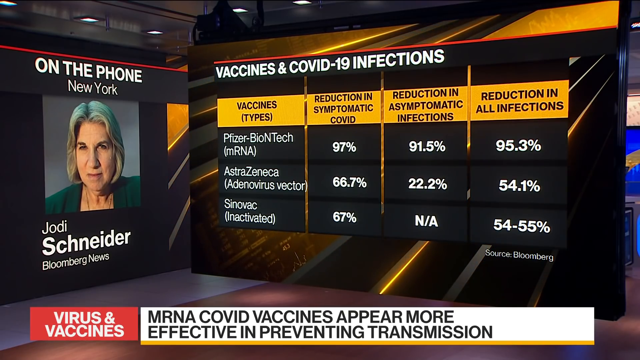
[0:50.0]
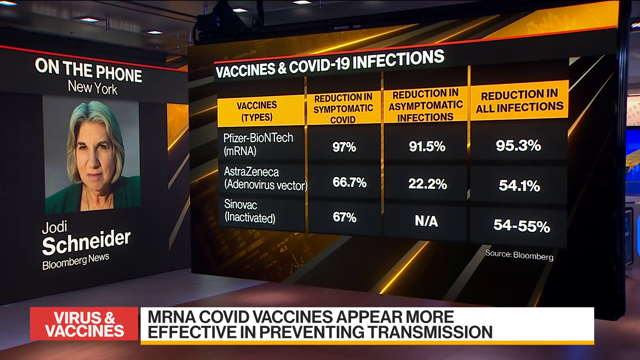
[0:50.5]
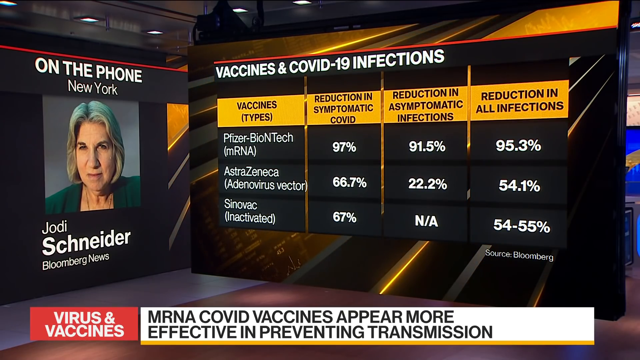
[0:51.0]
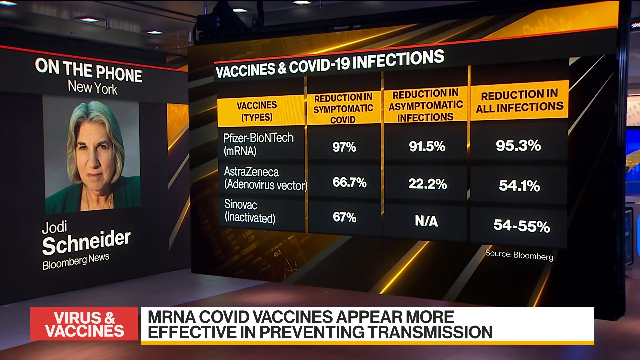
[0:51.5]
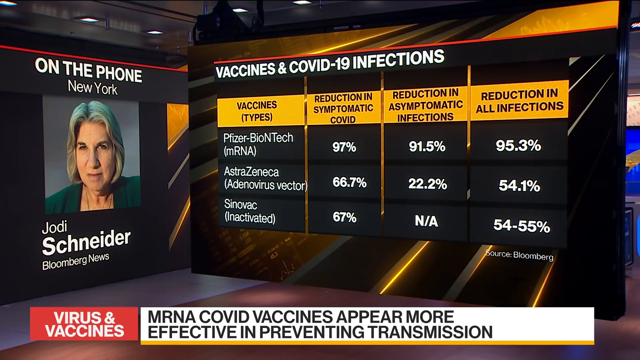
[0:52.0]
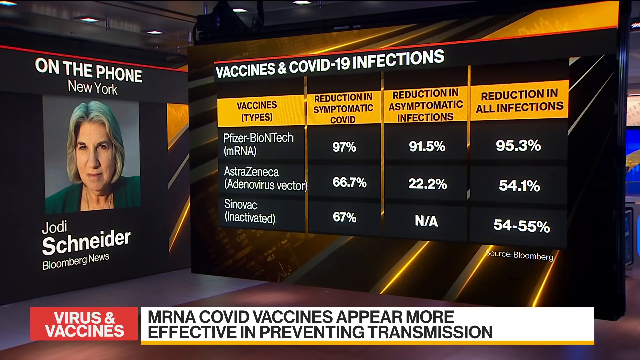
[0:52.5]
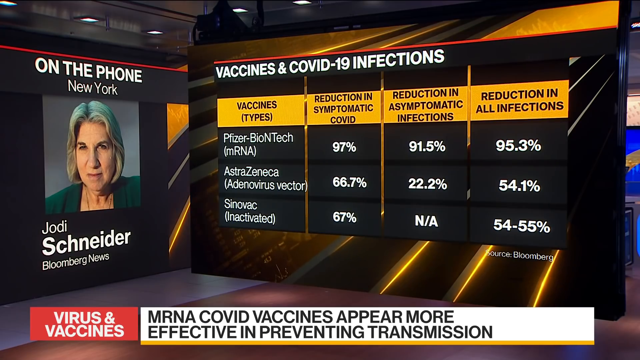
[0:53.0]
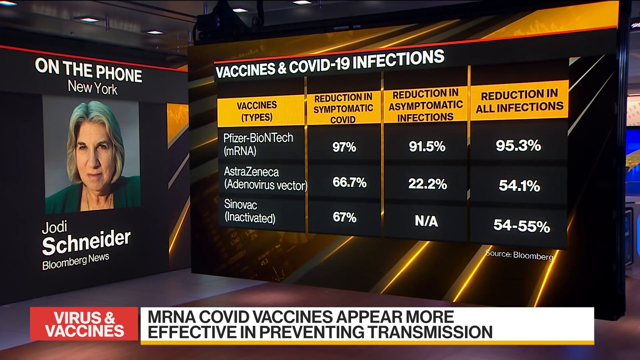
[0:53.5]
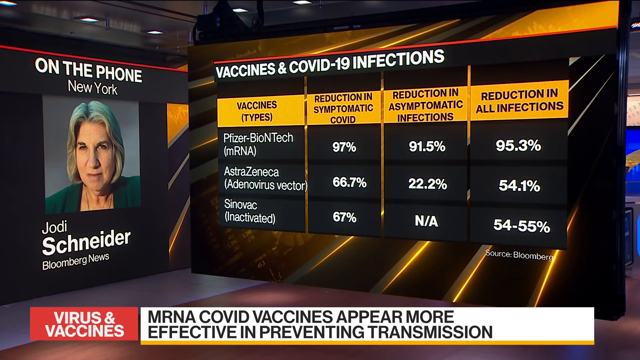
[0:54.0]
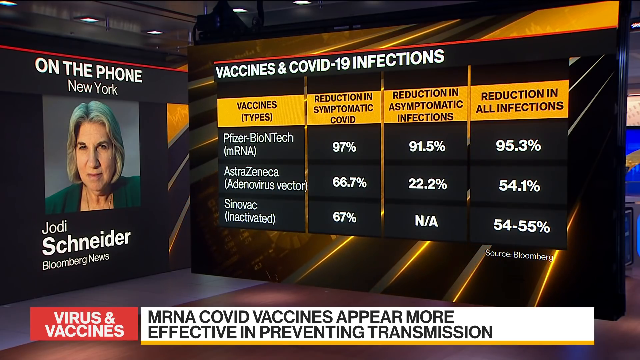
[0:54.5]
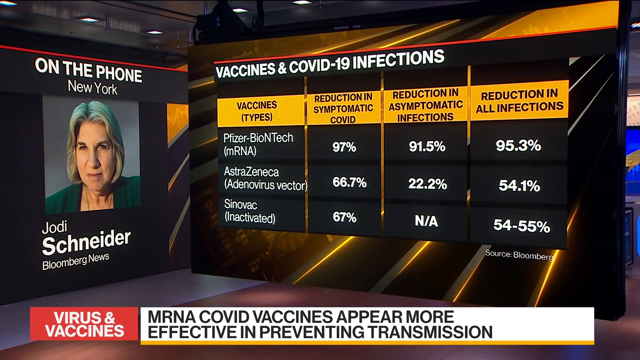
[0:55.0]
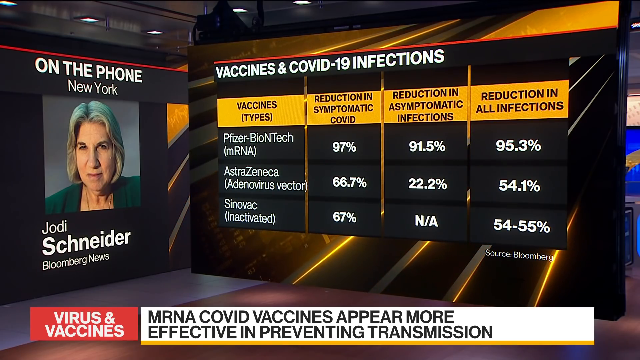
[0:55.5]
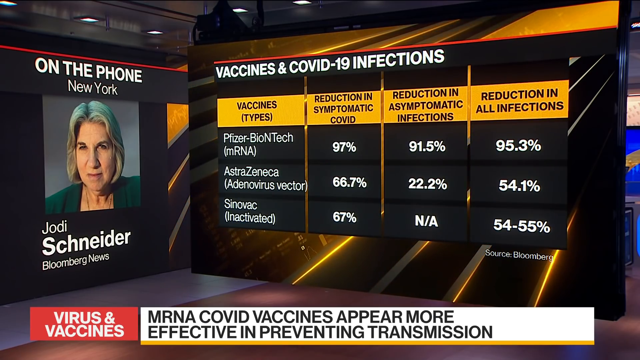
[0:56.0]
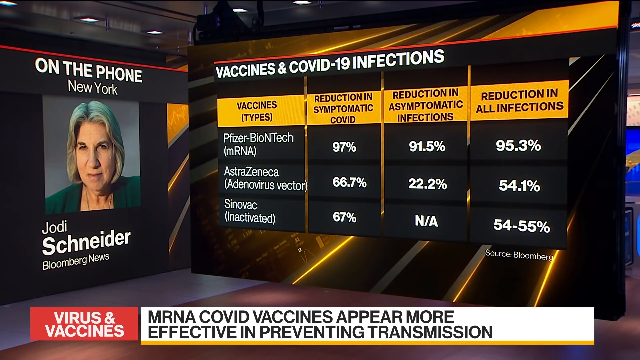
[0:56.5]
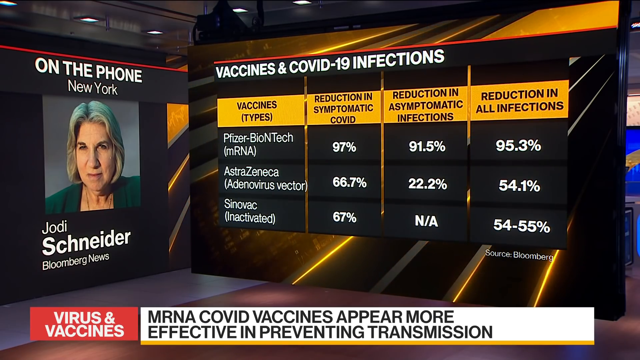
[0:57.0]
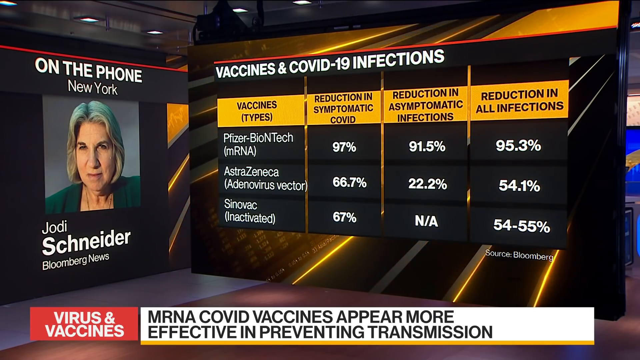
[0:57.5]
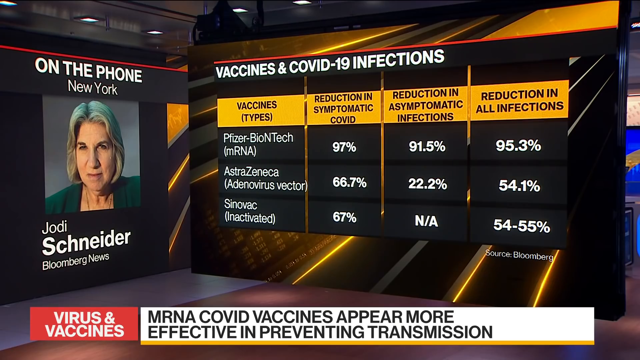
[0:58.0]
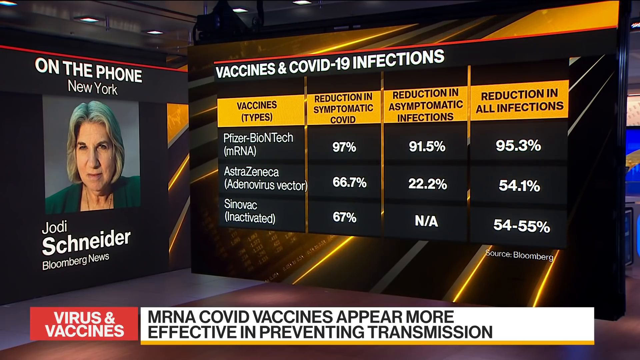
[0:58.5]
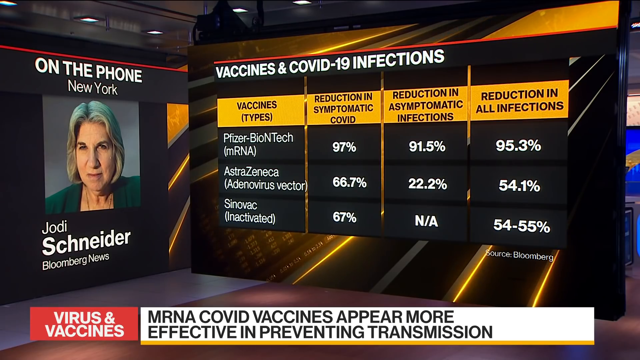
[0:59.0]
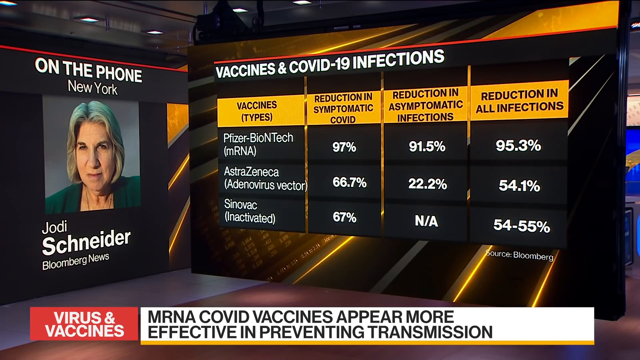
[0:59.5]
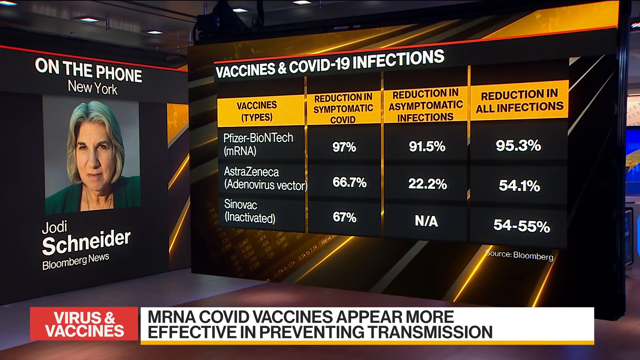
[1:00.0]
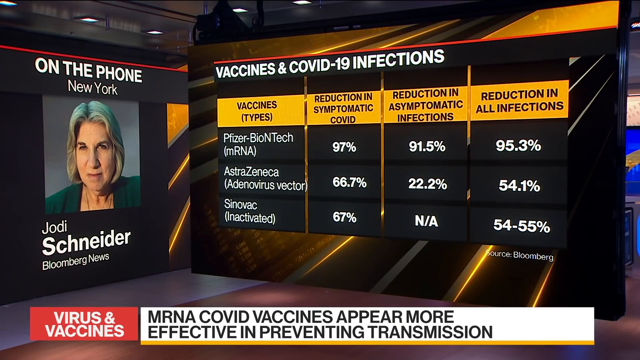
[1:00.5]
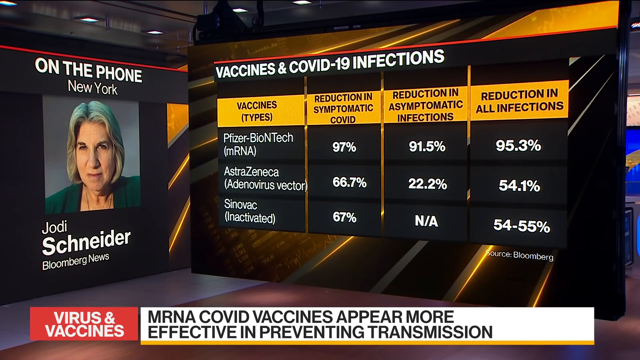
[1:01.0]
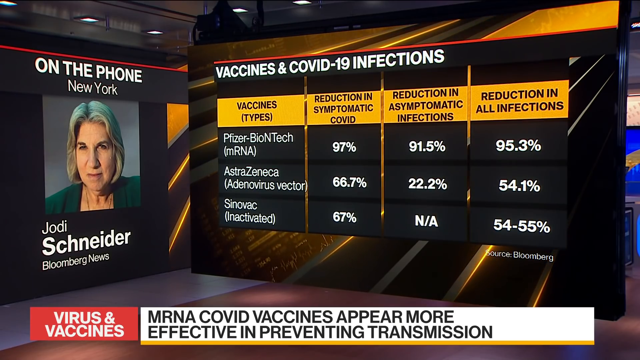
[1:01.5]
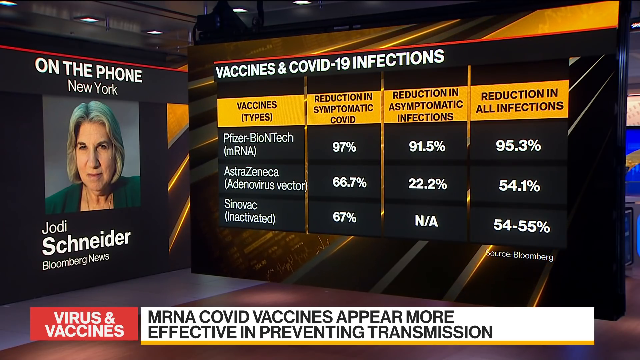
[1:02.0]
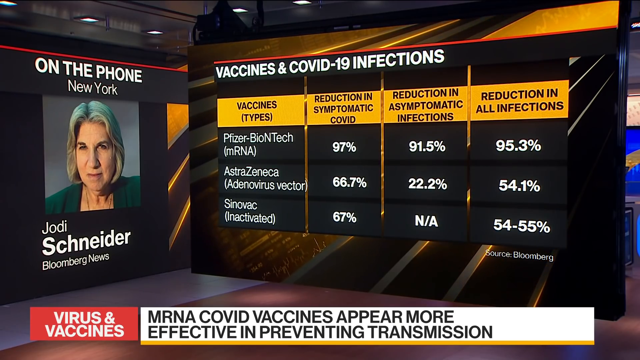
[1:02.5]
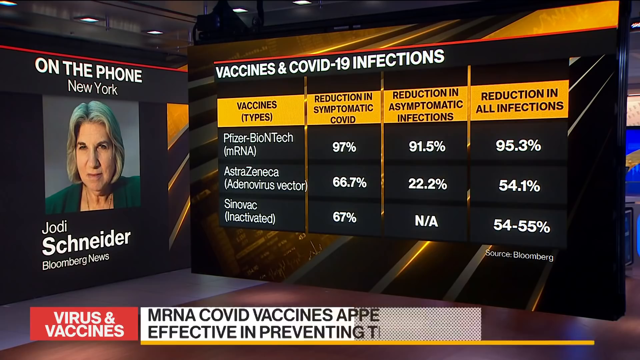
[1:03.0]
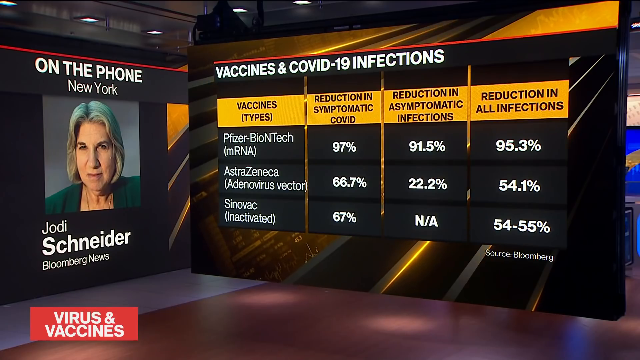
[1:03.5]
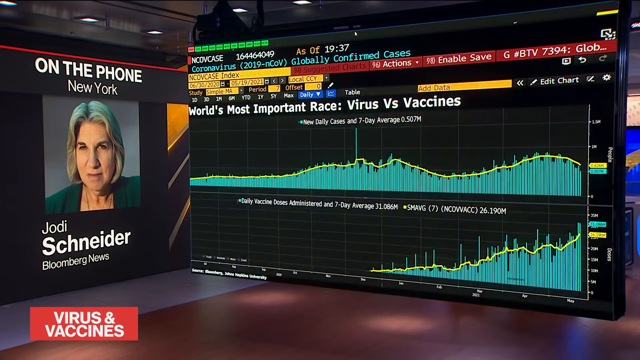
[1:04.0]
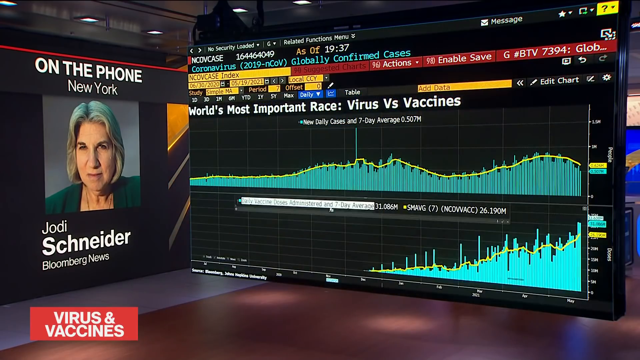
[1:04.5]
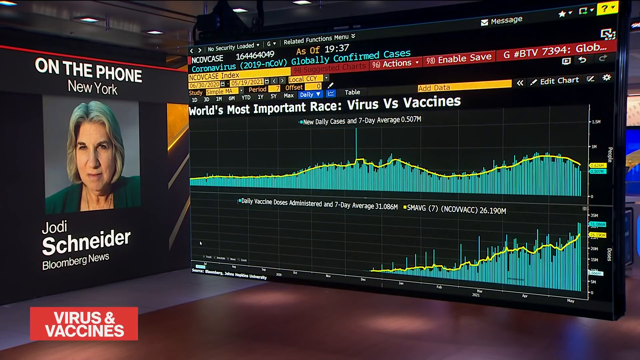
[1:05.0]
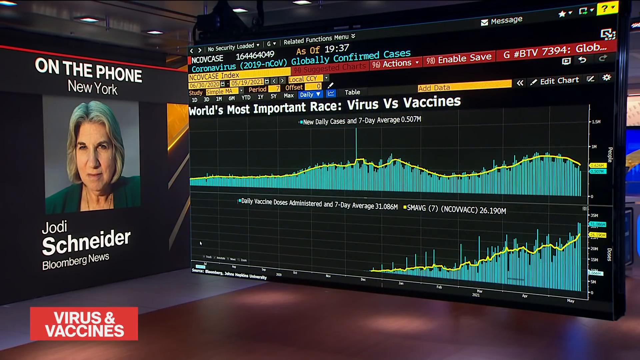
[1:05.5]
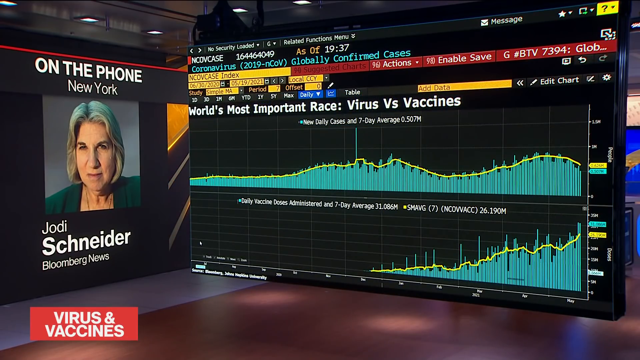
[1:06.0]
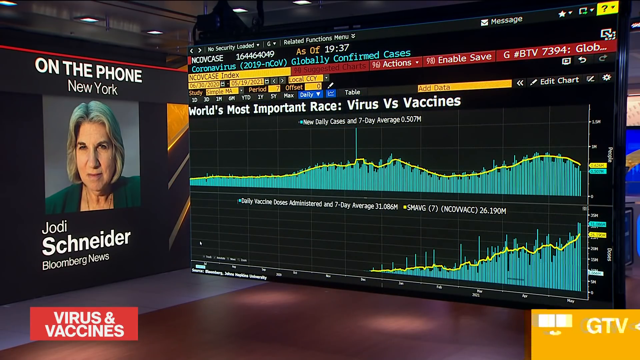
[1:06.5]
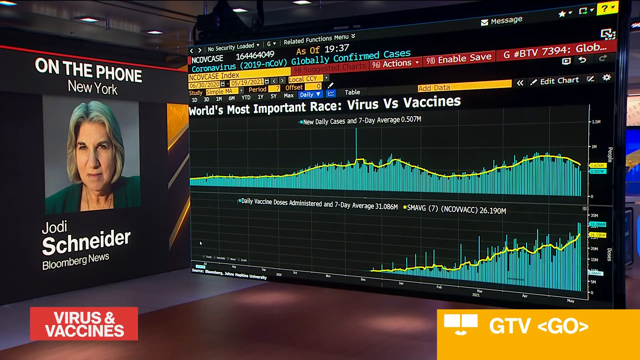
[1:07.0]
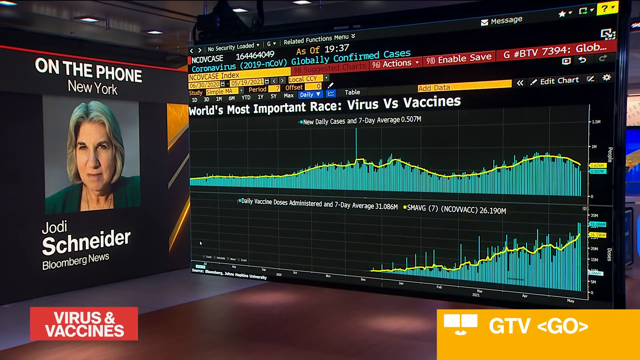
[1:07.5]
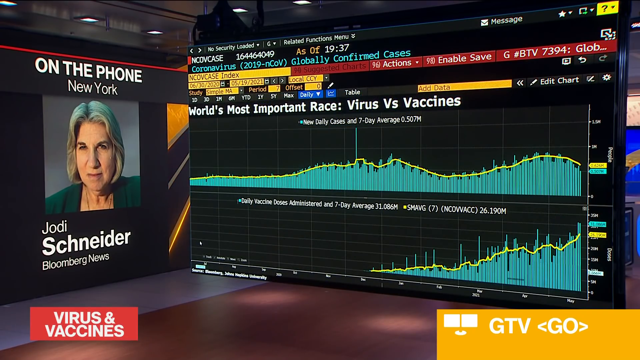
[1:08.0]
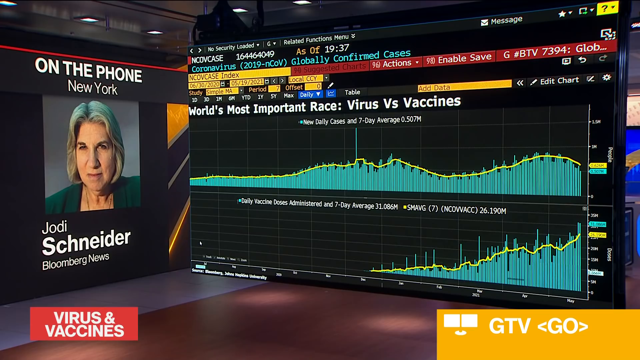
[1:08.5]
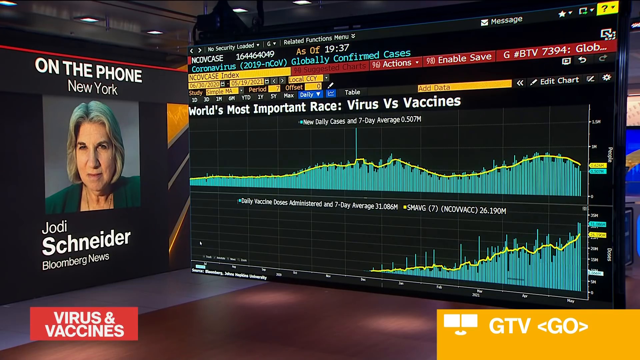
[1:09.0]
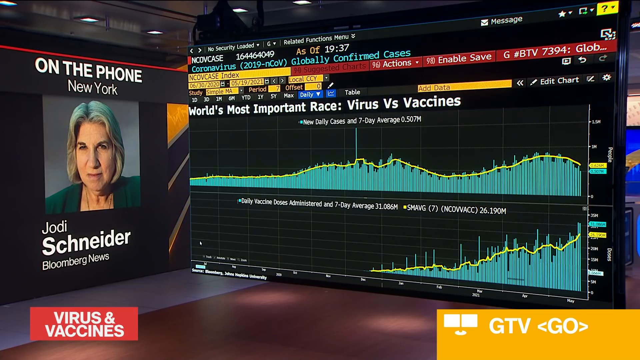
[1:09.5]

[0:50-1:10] In the newsroom, Jody is still on the phone, and the vaccine types remain on the screen, with Pfizer BioNTech RNA still the most effective. The display then switches to another screen that reads "world's most important race, virus versus vaccines." It shows new daily cases as a seven-day average of 0.507 million and daily vaccine doses administered as a seven-day average of 31.086 million, along with coronavirus 2019 globally confirmed cases as of 7.37 PM. A big graph appears in teal blue with a yellow line at the top, set against a black background.